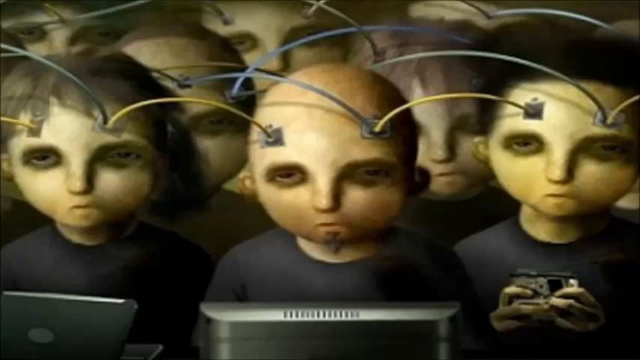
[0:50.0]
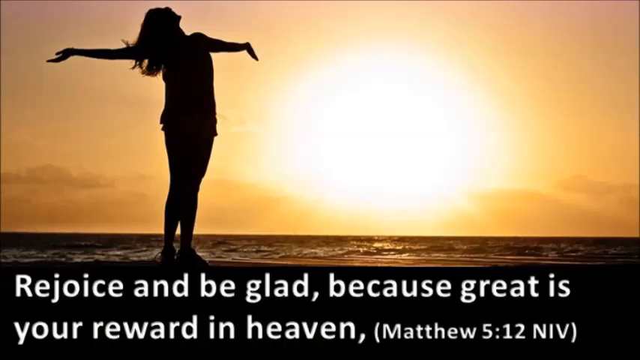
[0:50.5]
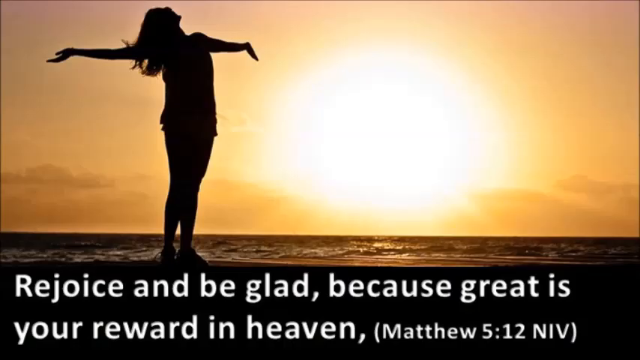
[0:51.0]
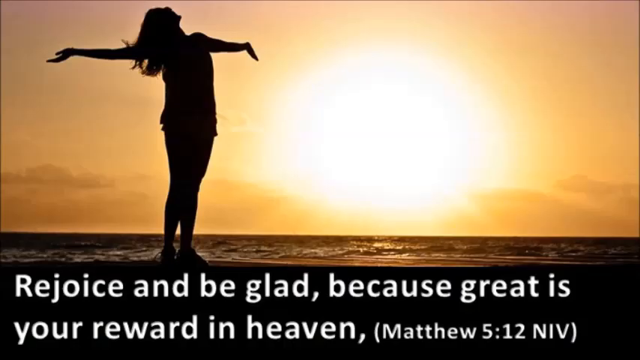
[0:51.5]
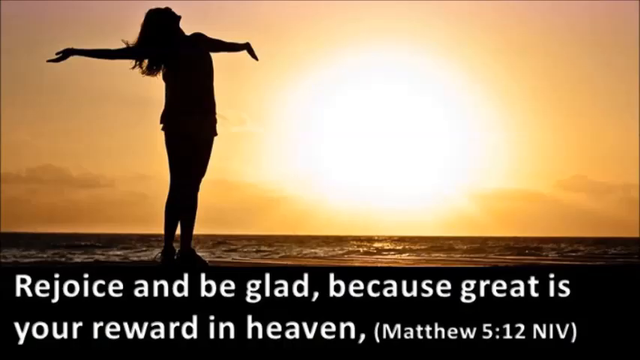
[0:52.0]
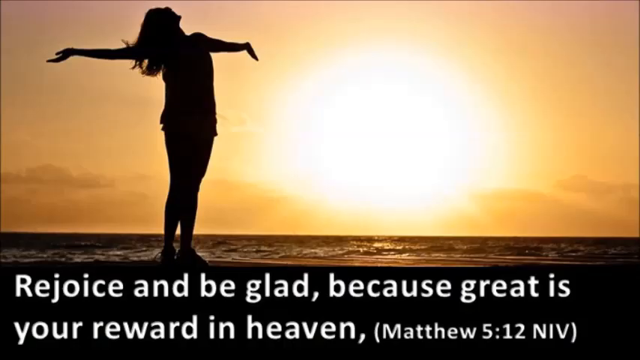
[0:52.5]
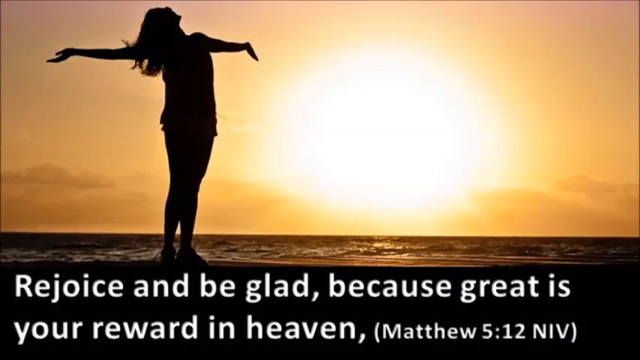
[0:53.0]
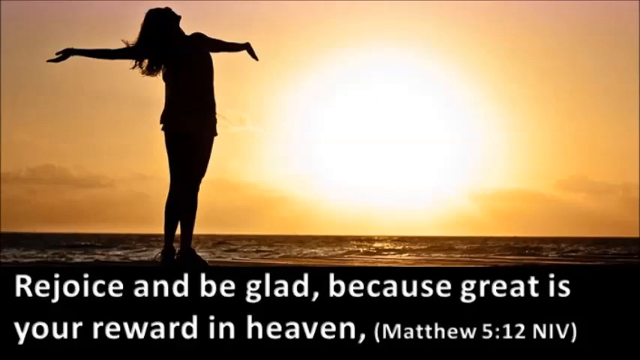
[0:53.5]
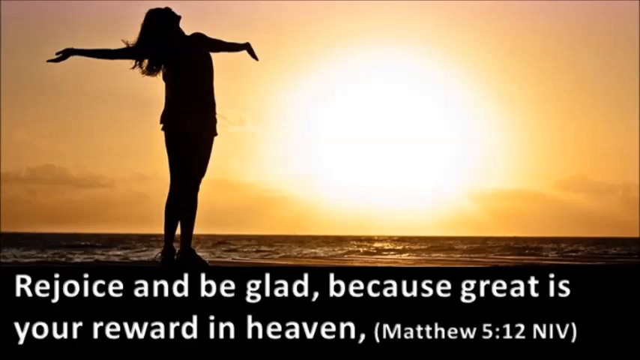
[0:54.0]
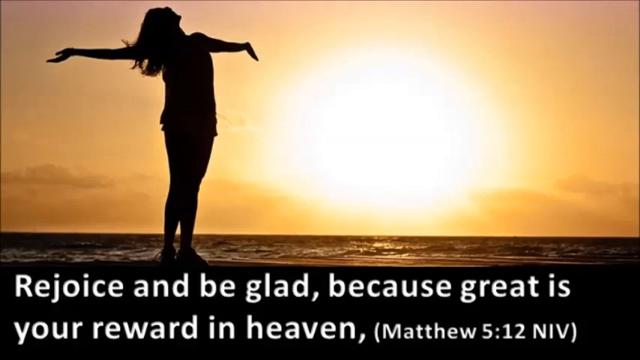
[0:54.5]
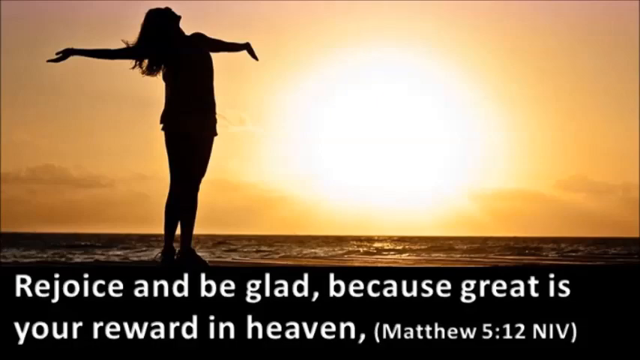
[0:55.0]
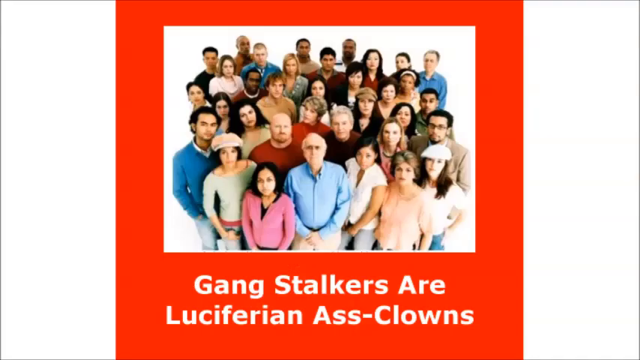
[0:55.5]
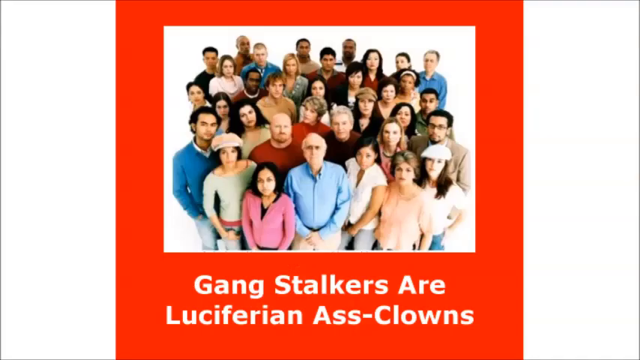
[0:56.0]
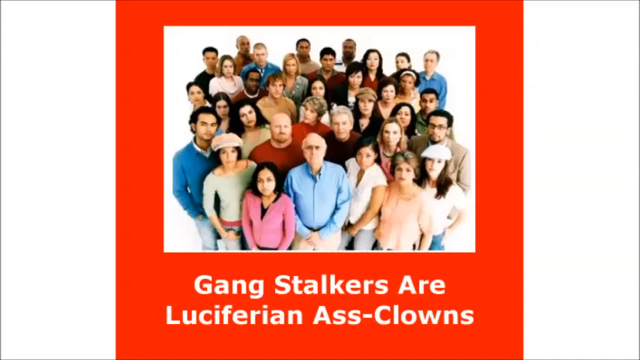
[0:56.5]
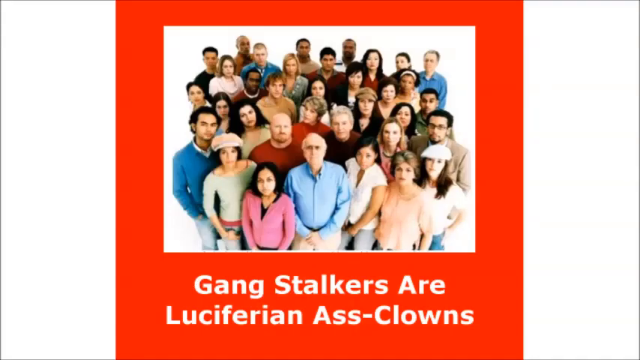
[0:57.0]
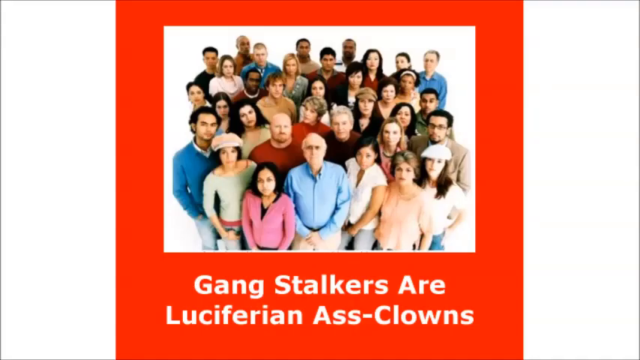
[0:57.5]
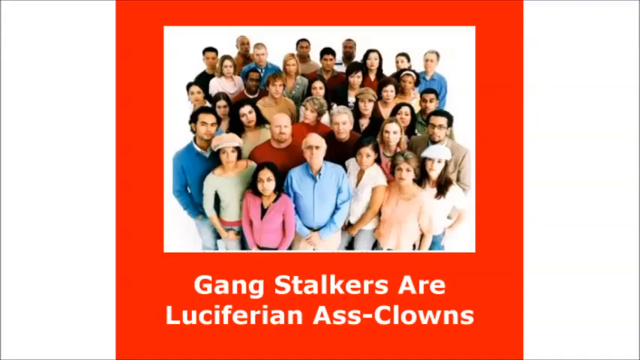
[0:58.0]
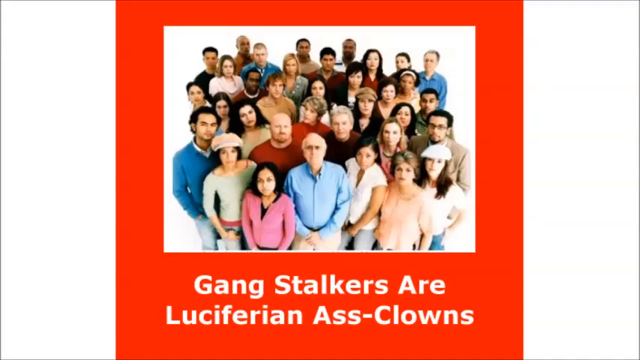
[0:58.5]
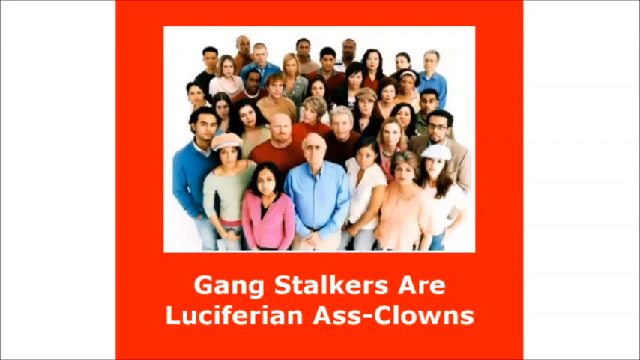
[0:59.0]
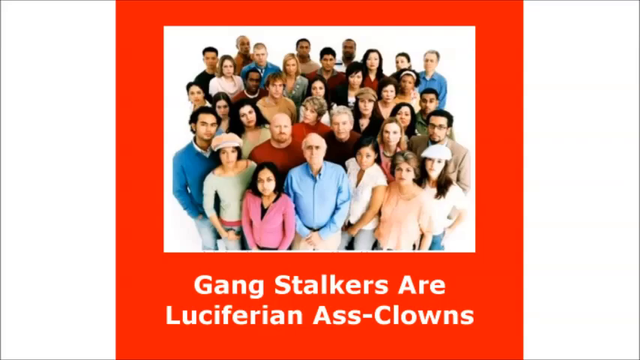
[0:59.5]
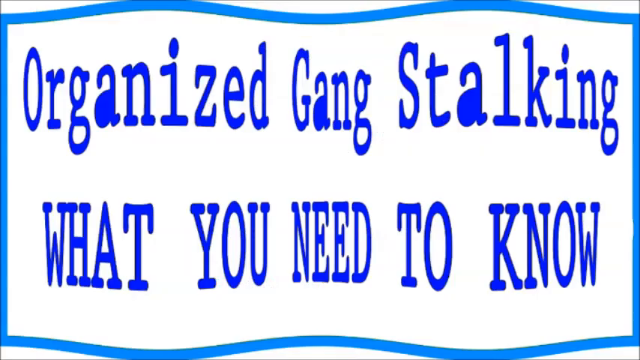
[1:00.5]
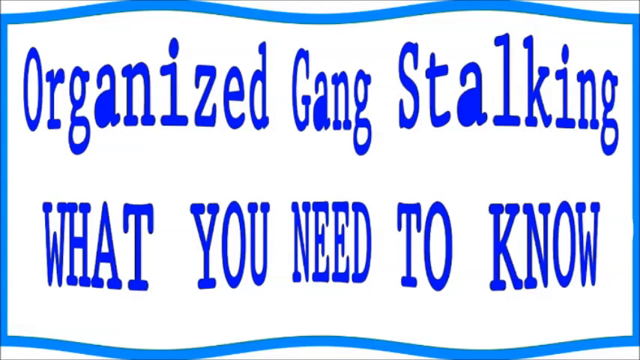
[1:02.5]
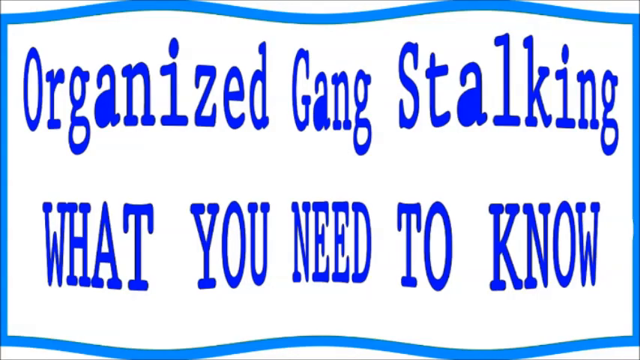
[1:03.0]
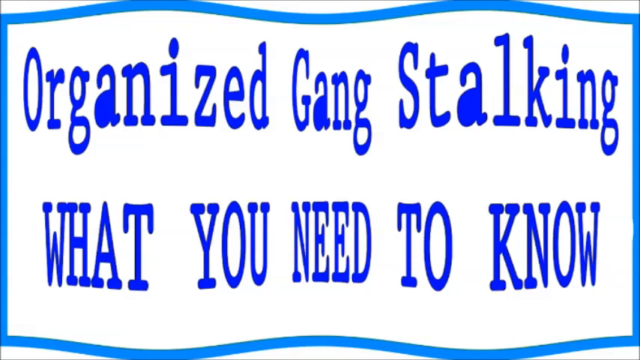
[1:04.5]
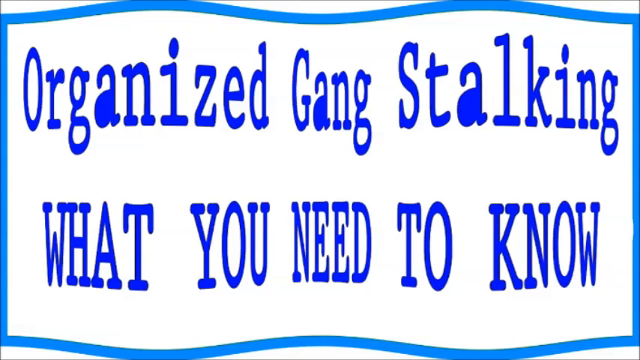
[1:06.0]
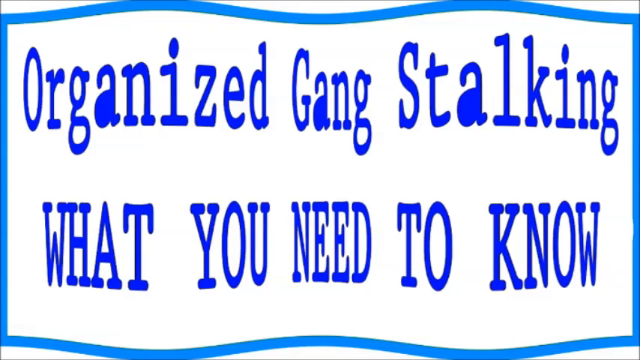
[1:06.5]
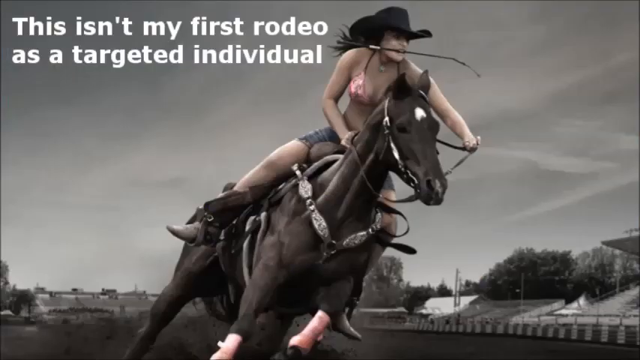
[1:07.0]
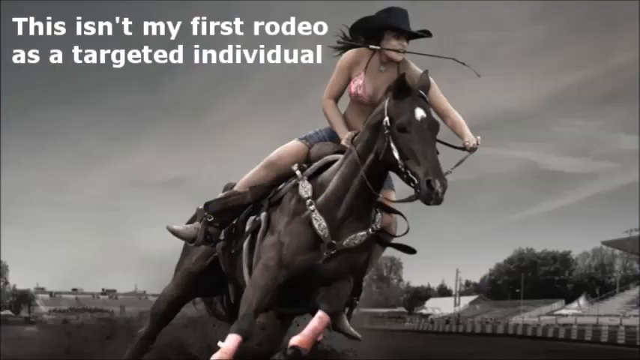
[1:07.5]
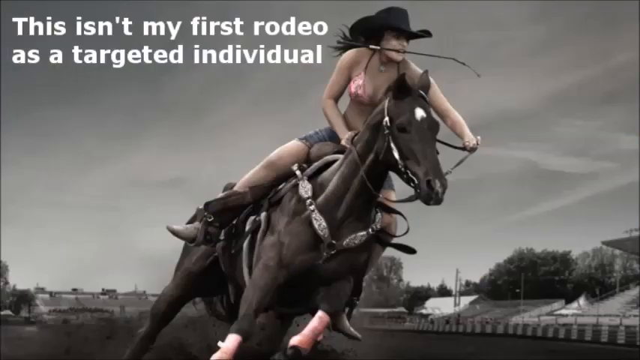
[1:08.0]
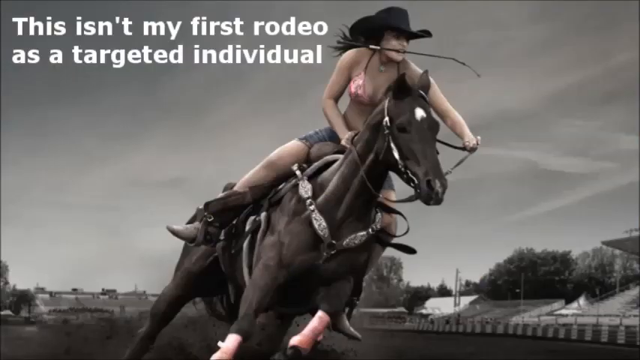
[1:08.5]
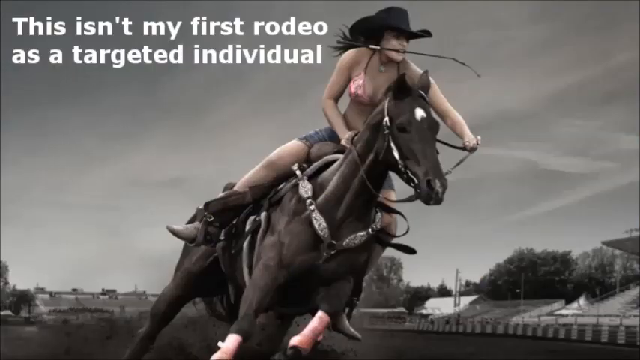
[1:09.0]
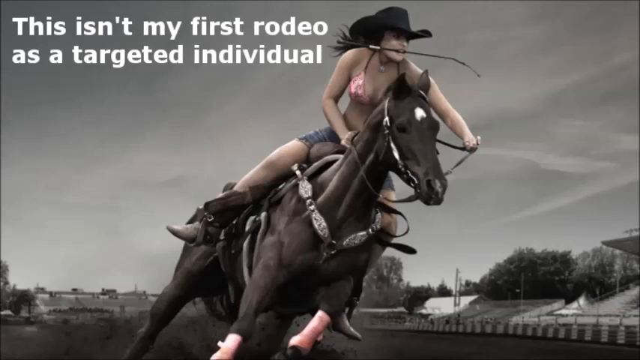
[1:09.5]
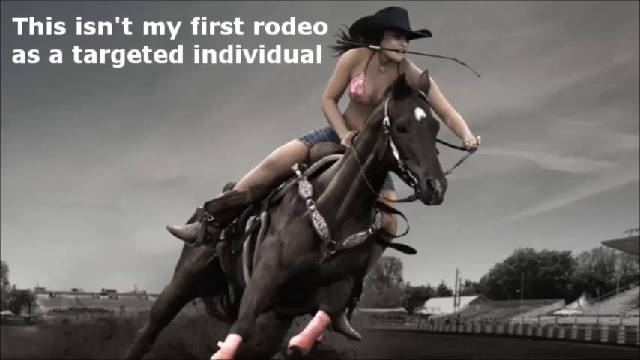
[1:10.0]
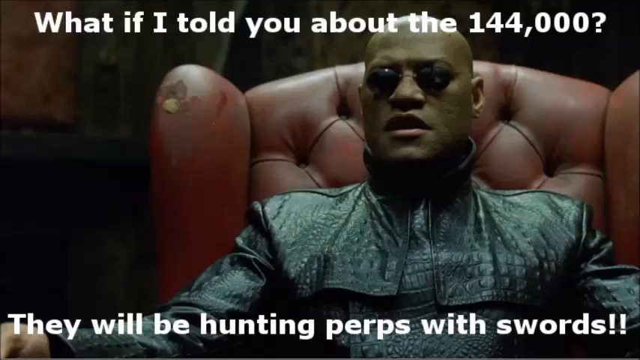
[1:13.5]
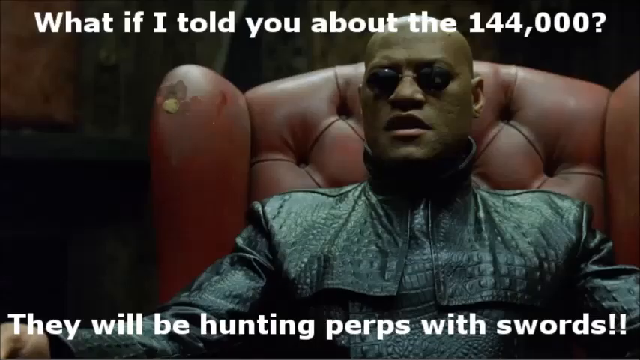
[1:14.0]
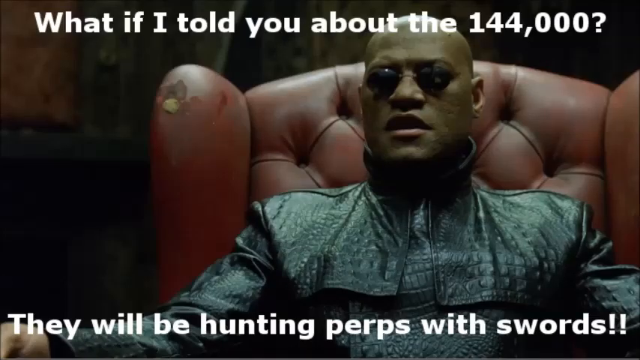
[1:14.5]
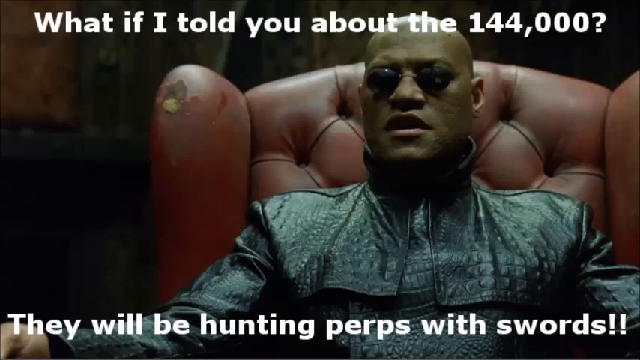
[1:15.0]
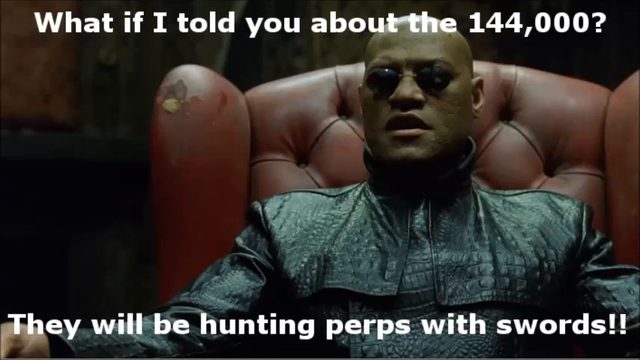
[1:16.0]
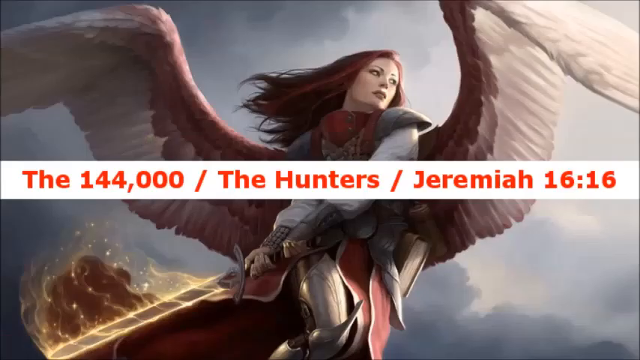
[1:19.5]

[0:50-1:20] An image occupies the upper part of the frame: the silhouette of a woman on her feet with both arms outstretched. In the background the sea is visible in the lower part, while the upper part shows an orange sky with a large sun on the right. Below, inside a black banner, there is white text. Next is an image on a white background made up of a rectangle containing a red area with white text at the bottom; at the top of this rectangle is another rectangle holding a picture of a group of people taken from above. Another image follows with blue text inside a curvilinear sky-blue frame. Then an image of a woman on a dark horse appears, with white text in the top left corner. Finally, there is an image of a man wearing sunglasses and a black leather jacket, sitting on a rather ruined red armchair, with white sentences at the top and bottom of the screen.